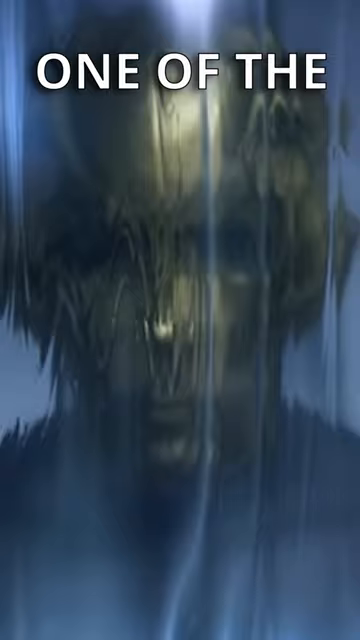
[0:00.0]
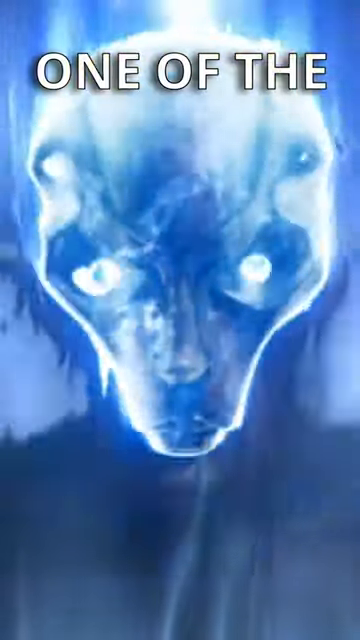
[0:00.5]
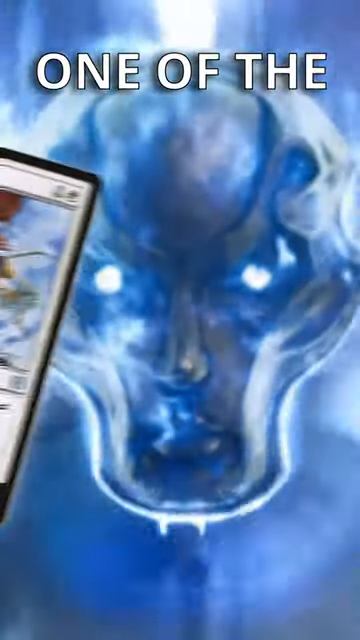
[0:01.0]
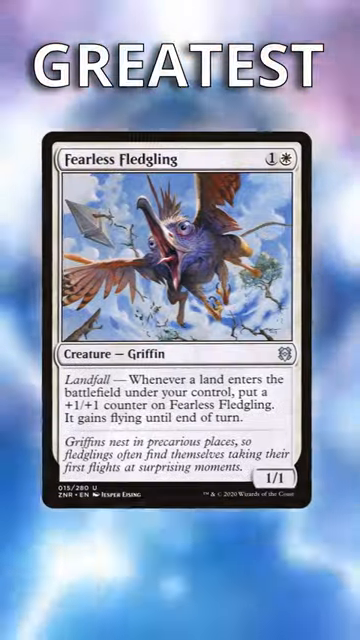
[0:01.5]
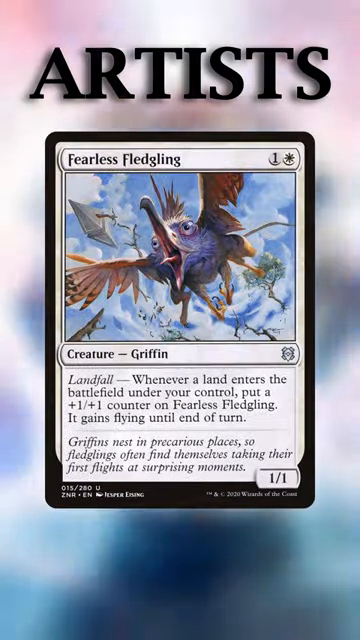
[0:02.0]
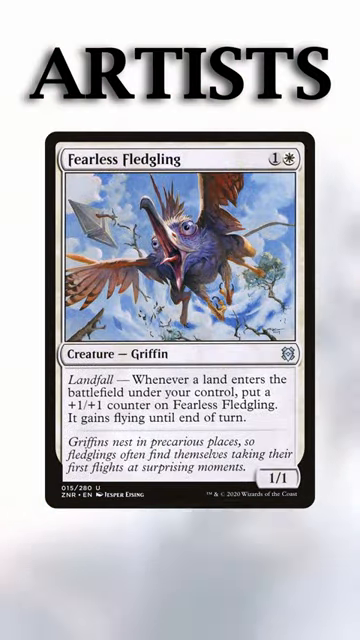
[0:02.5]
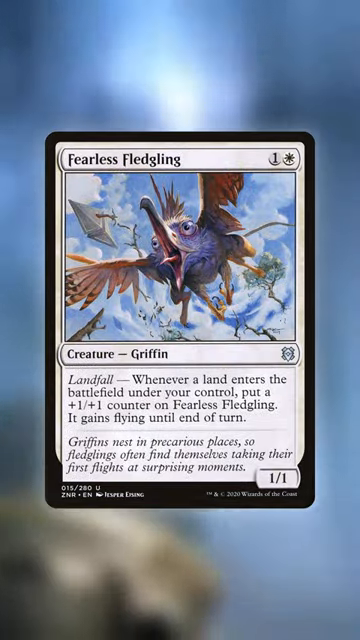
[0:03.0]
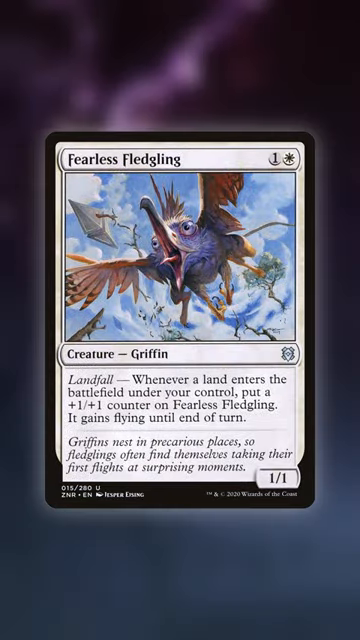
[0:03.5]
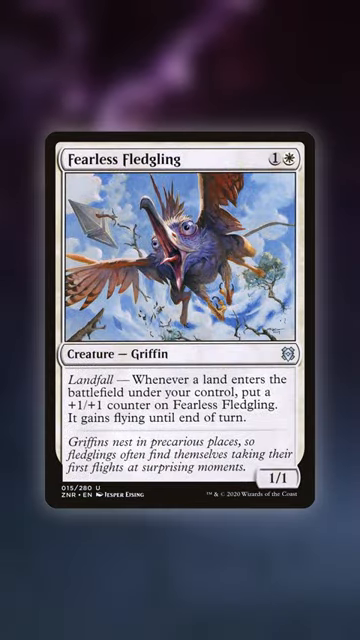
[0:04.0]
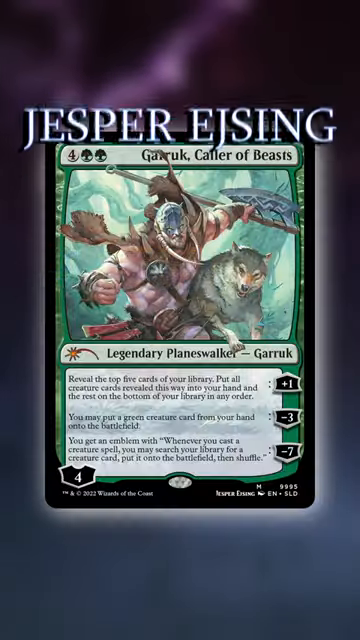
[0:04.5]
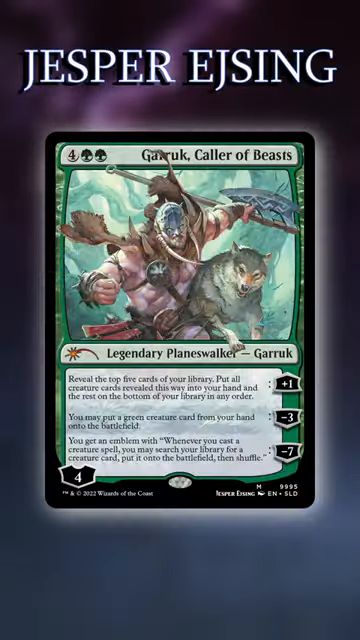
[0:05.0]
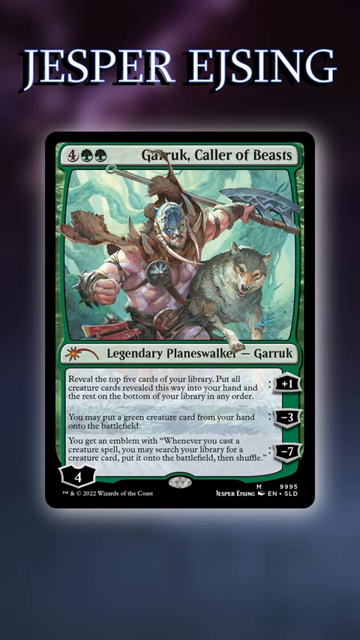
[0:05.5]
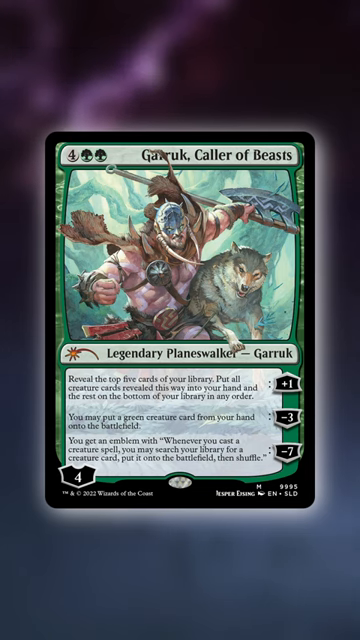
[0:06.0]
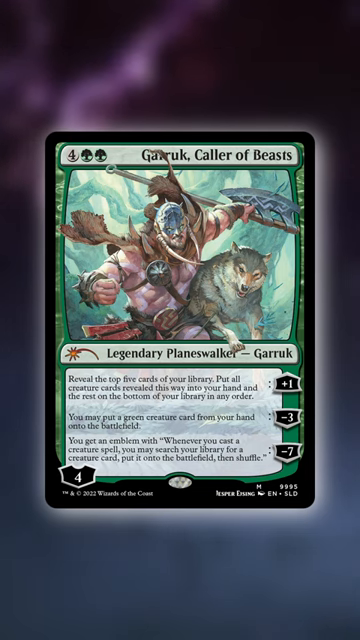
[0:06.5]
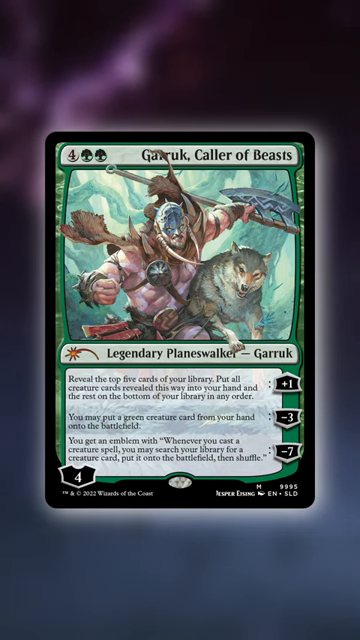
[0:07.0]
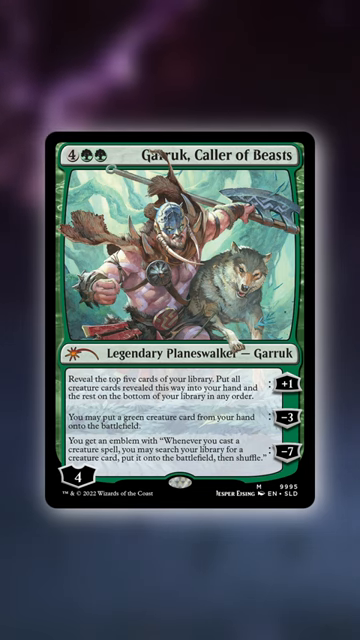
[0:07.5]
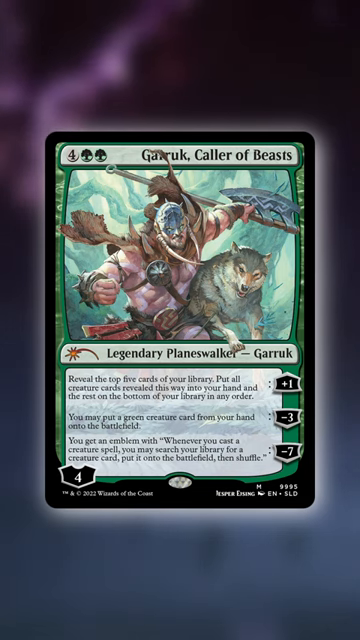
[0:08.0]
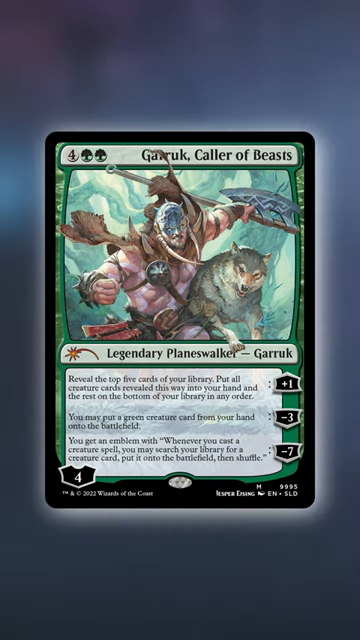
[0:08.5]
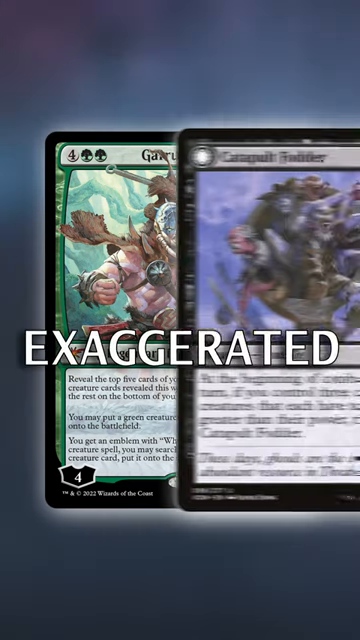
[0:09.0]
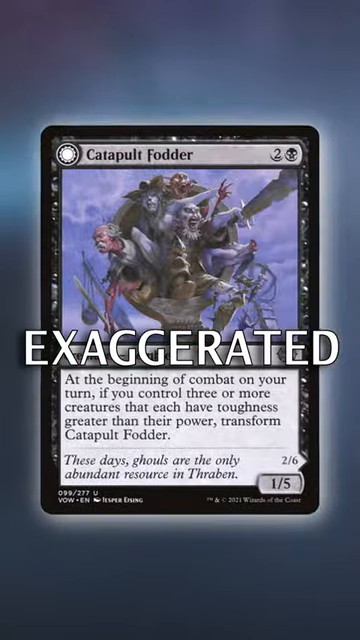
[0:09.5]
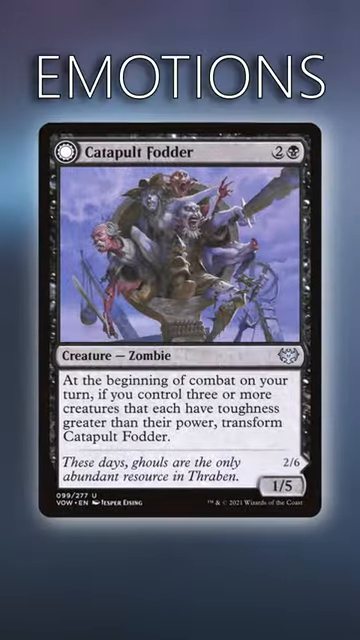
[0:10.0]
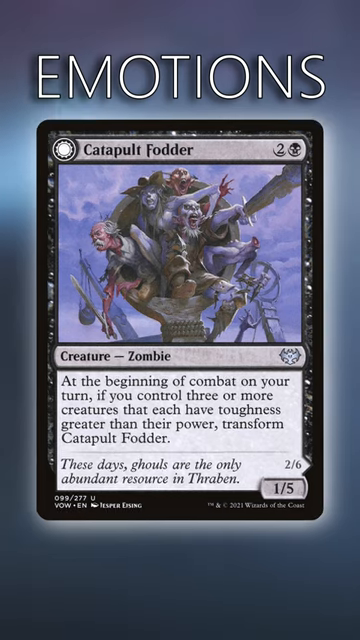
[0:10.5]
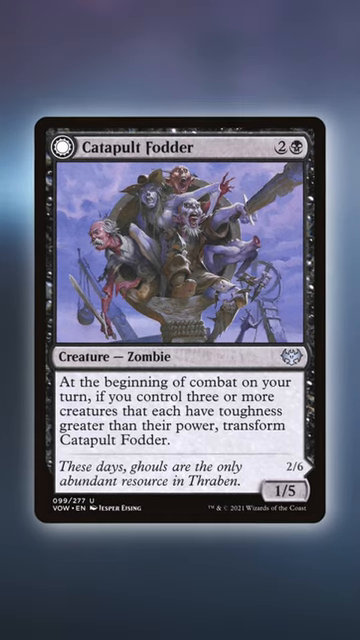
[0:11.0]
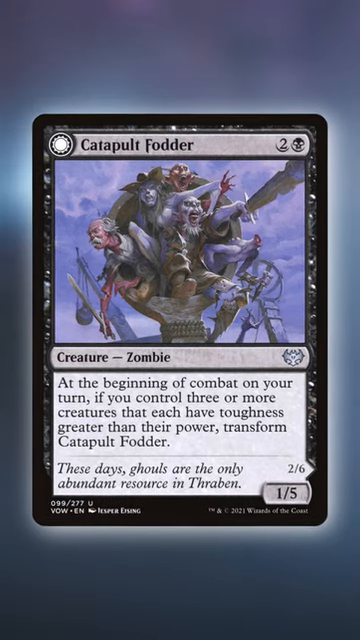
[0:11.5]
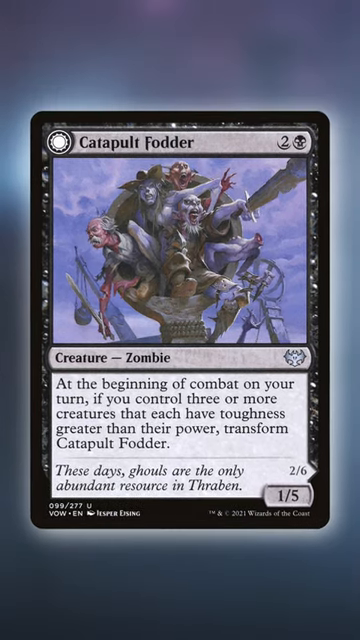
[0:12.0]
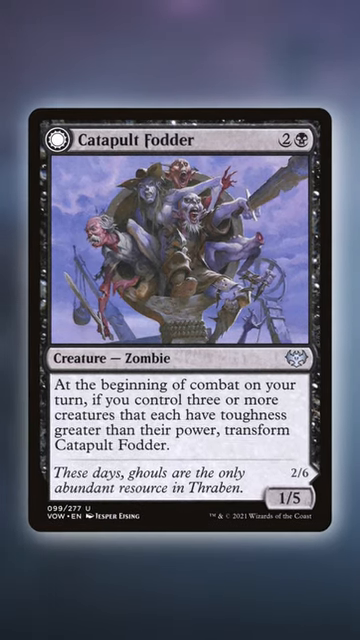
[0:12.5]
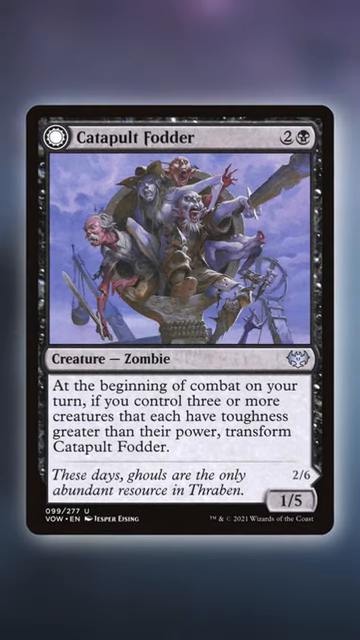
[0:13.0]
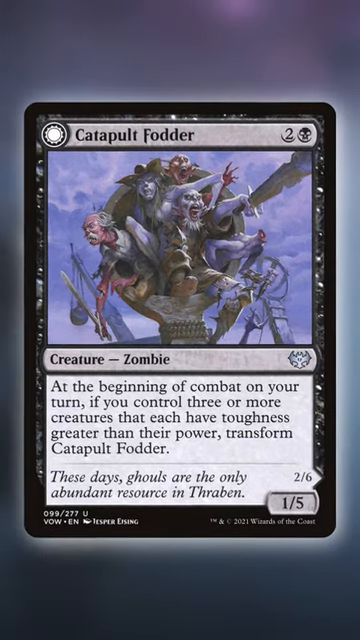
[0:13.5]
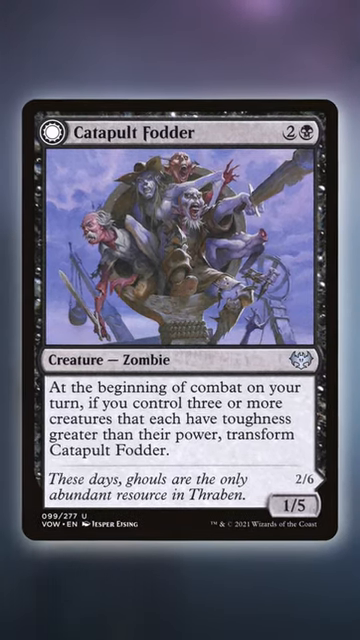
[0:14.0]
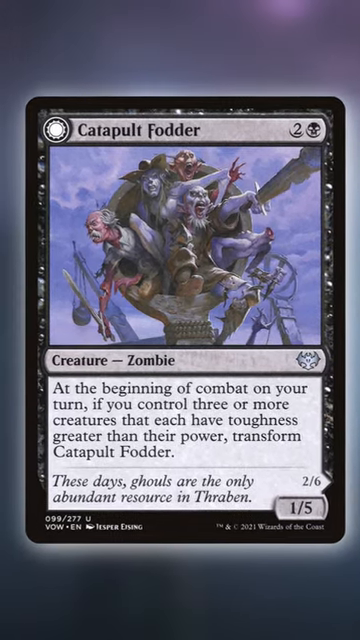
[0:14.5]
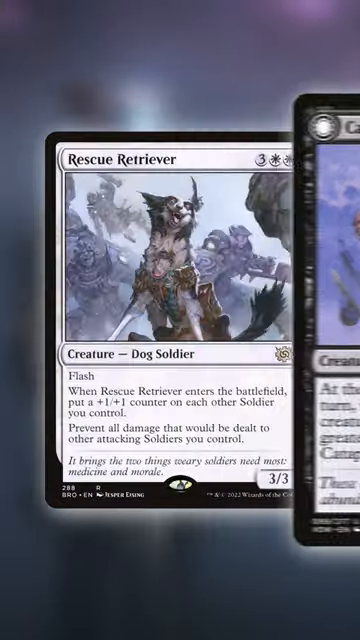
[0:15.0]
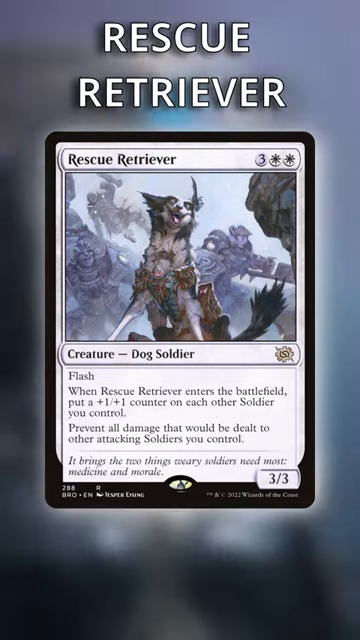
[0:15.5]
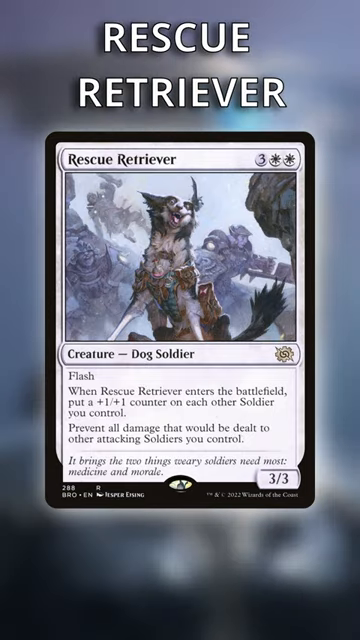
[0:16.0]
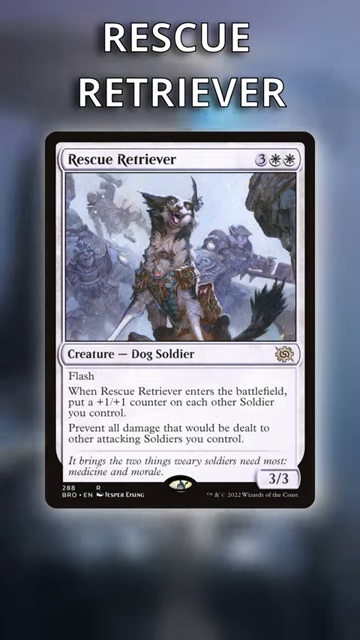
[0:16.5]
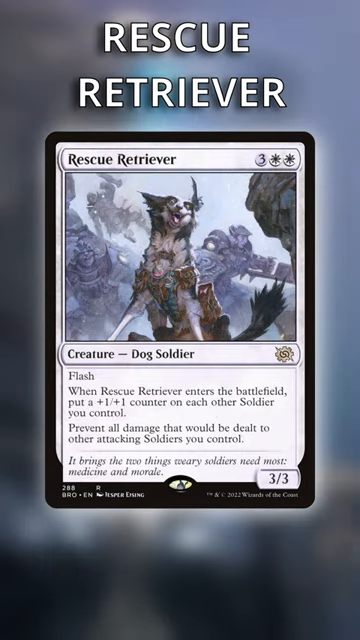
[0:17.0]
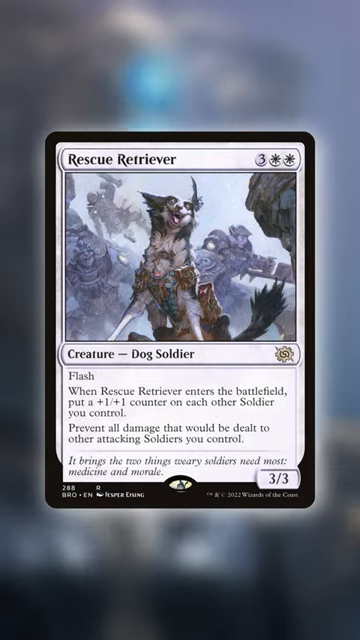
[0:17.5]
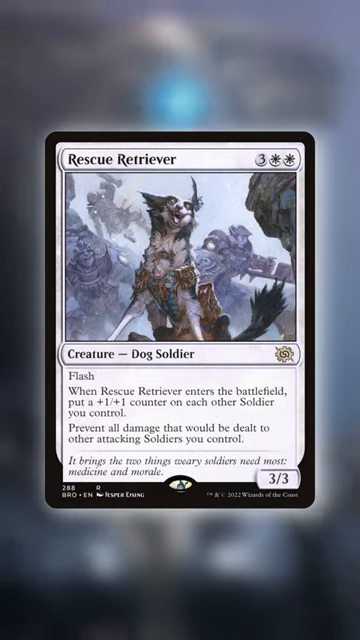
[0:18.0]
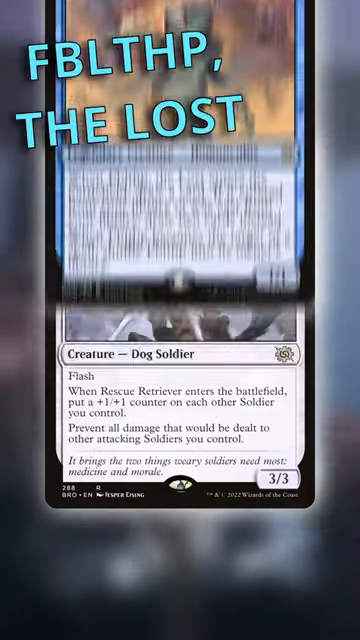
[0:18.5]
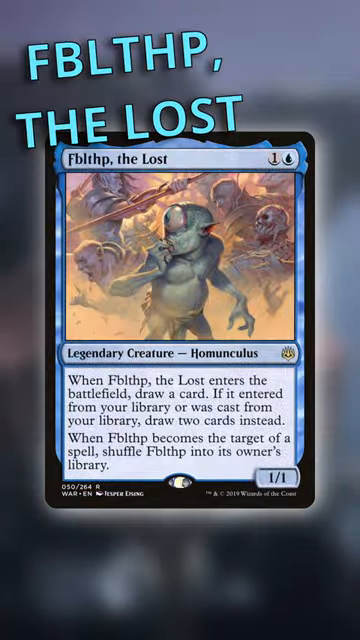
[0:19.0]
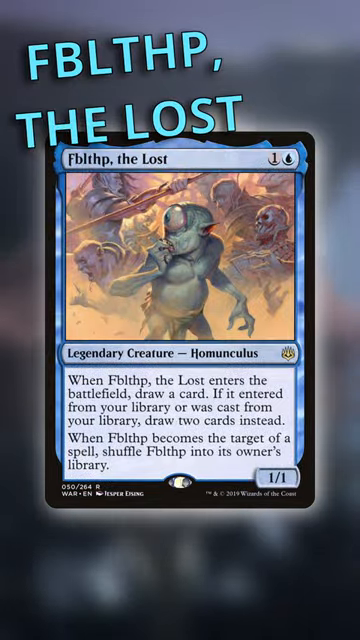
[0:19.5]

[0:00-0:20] The intro is an extreme animation style of card gameplay. It first shows an alien-like creature, and then a card pops up. The cards are labeled; one states "artist," and the character's name is Fearless Fleeting. This is a flying creature, almost like a bird or a dinosaur bird, and the card describes what it does and where it lives. Other cards pop up as well, including Jester and another character with a name that is hard to read. One card shows what looks like a zombie character. The cards introduce what each character represents.